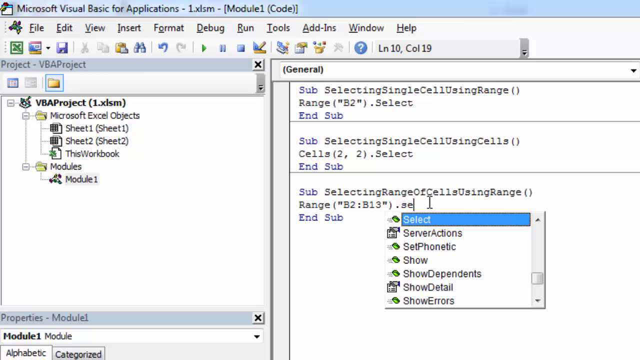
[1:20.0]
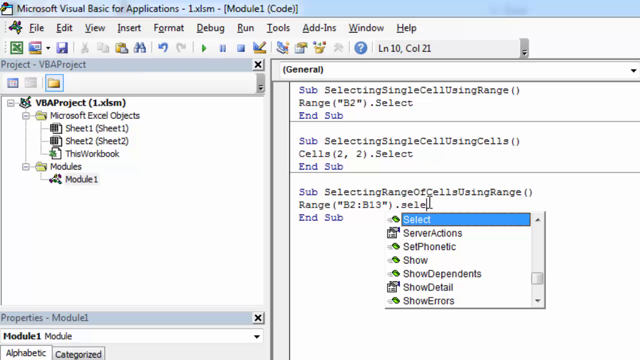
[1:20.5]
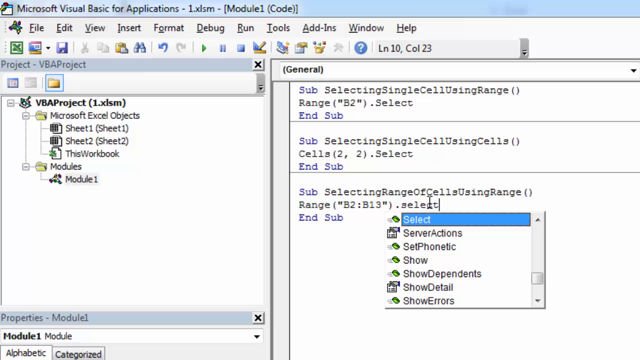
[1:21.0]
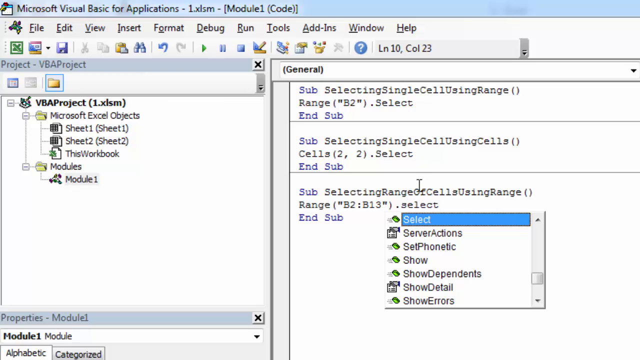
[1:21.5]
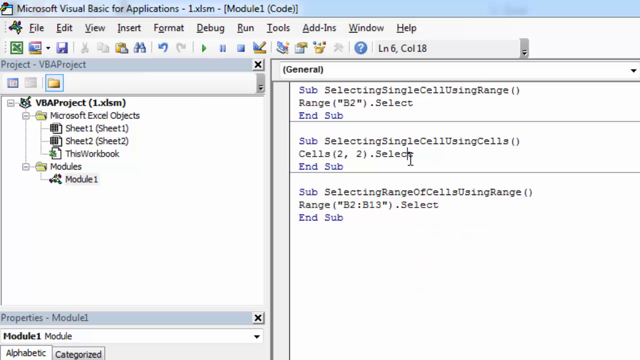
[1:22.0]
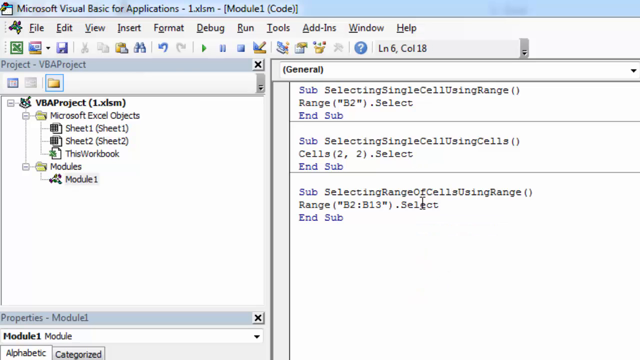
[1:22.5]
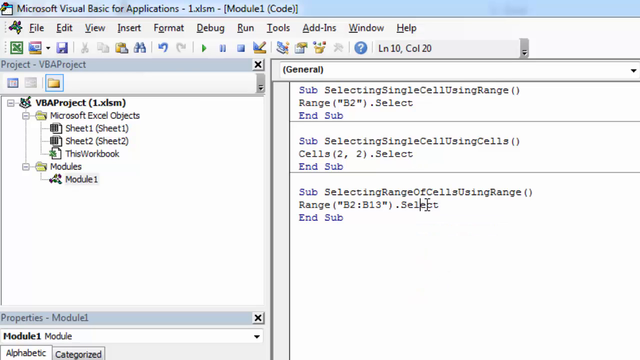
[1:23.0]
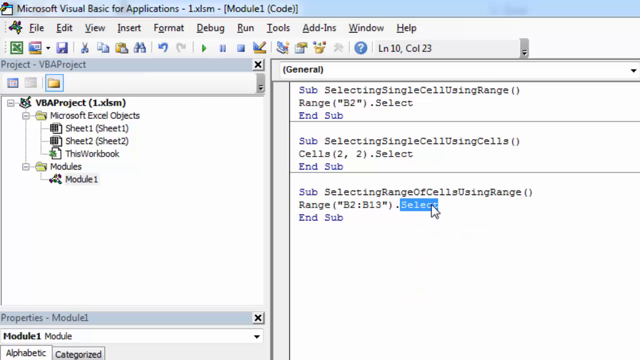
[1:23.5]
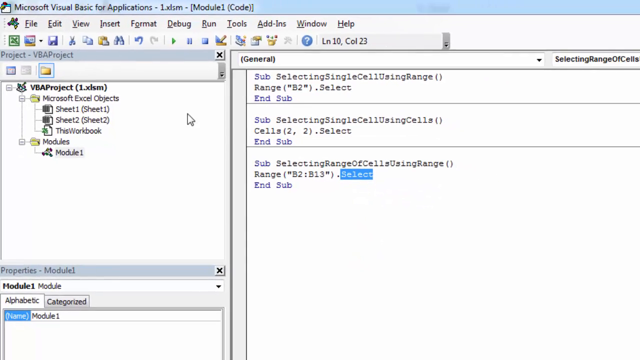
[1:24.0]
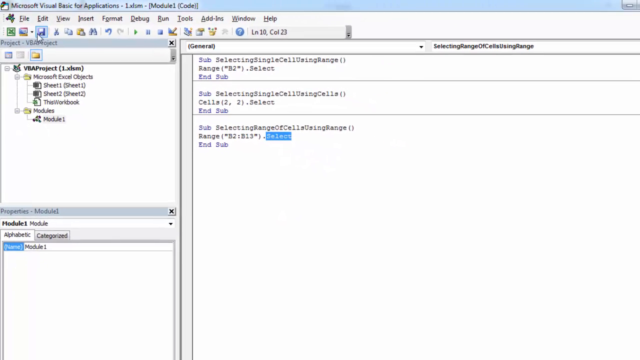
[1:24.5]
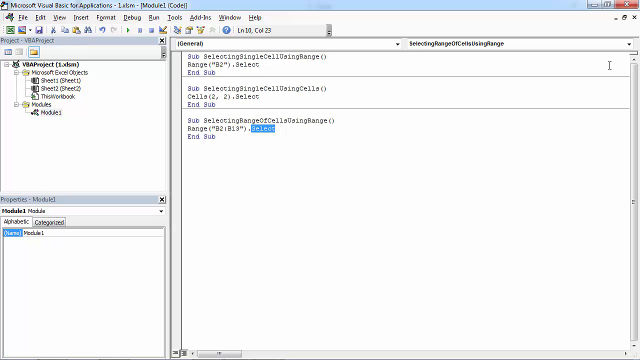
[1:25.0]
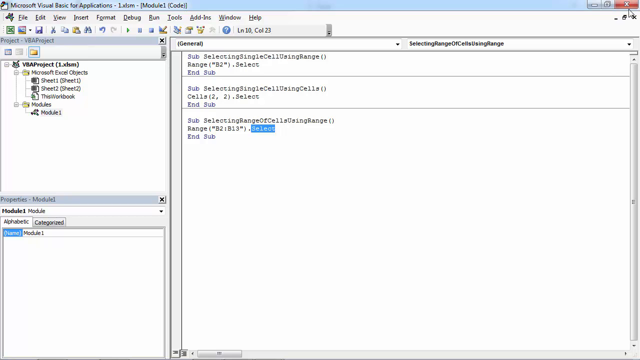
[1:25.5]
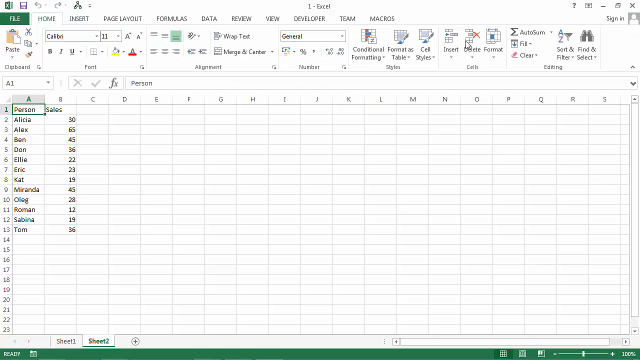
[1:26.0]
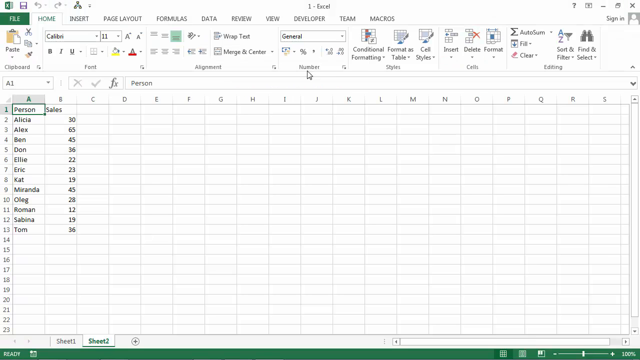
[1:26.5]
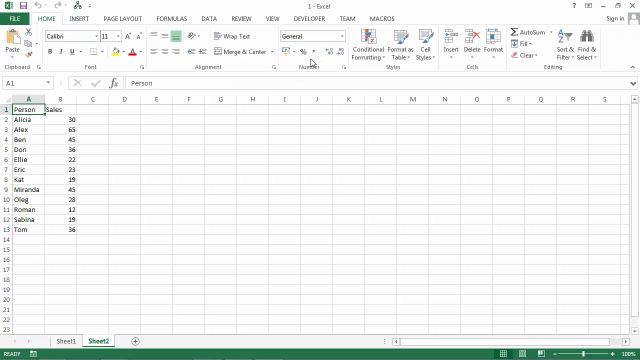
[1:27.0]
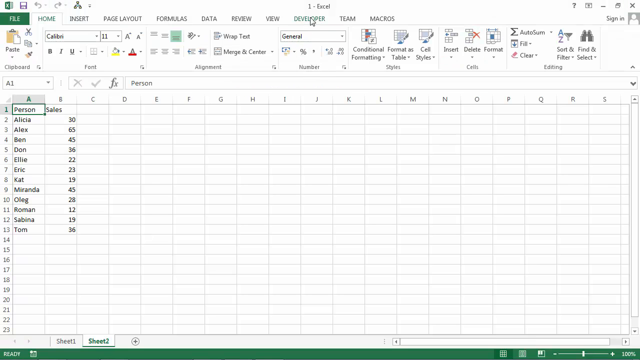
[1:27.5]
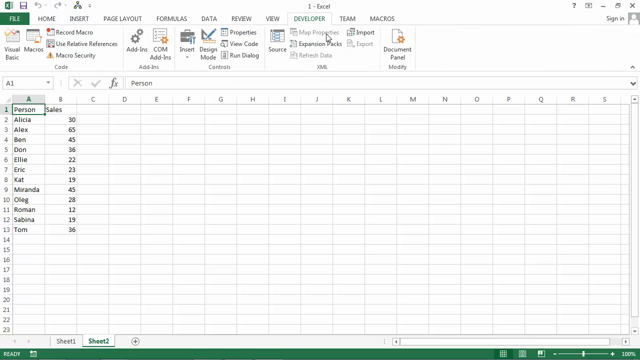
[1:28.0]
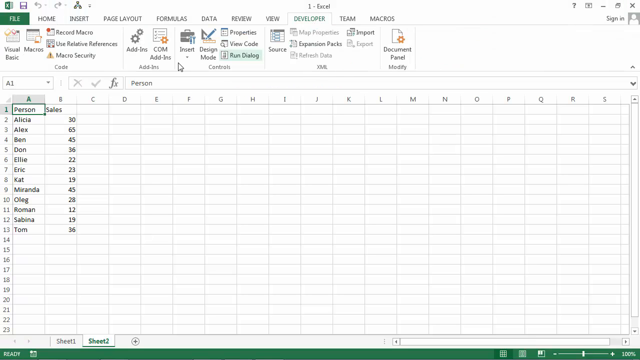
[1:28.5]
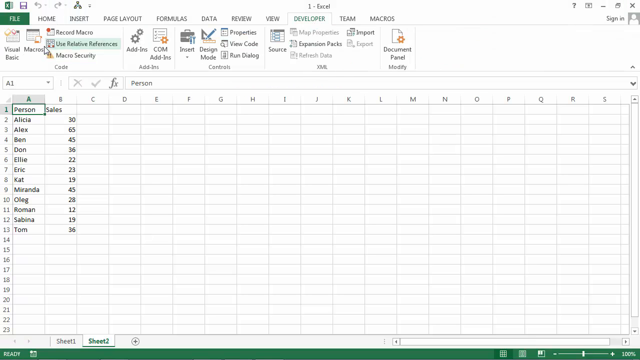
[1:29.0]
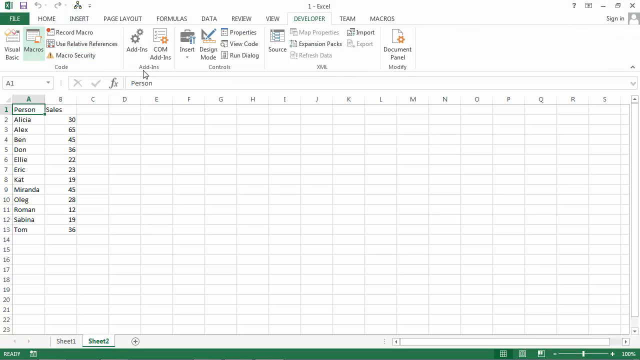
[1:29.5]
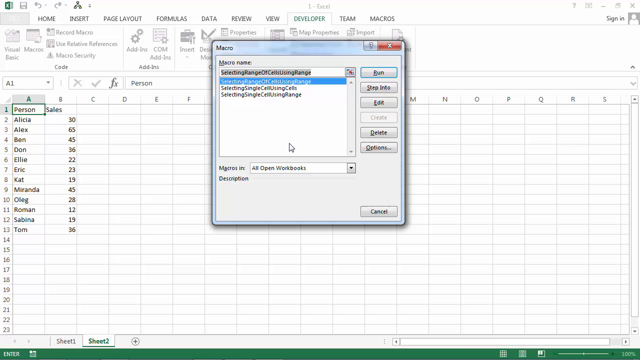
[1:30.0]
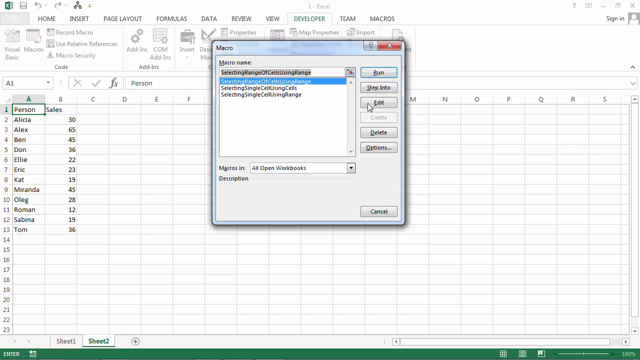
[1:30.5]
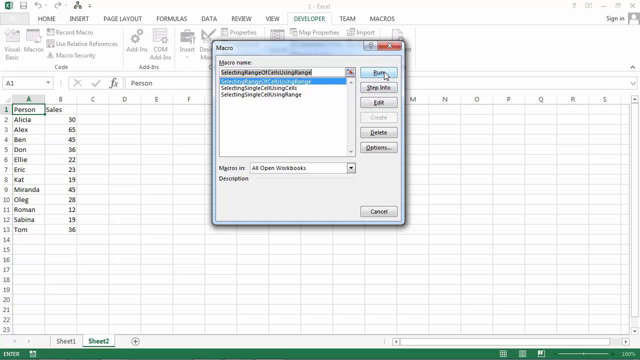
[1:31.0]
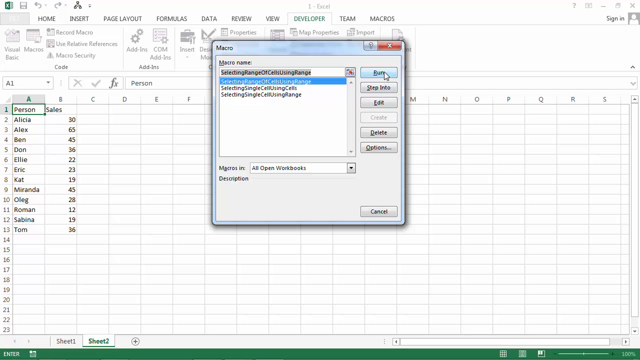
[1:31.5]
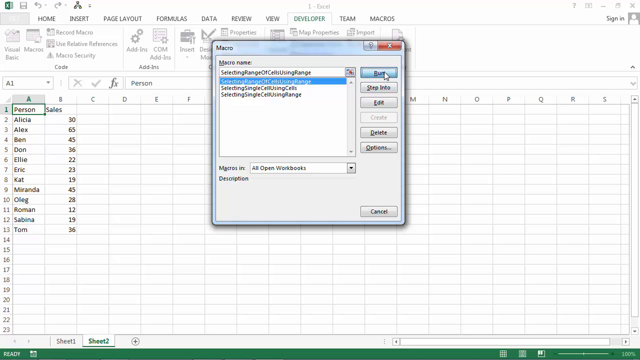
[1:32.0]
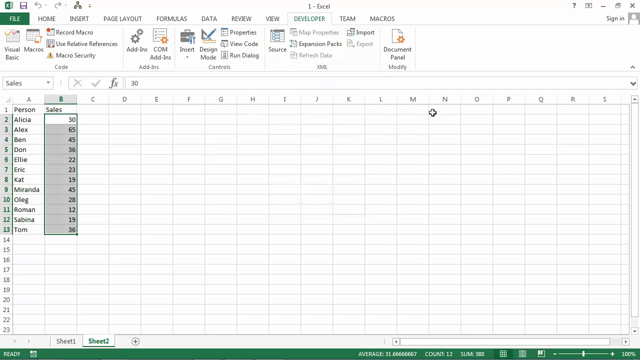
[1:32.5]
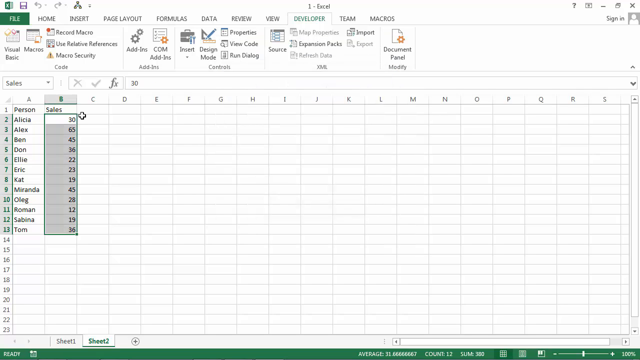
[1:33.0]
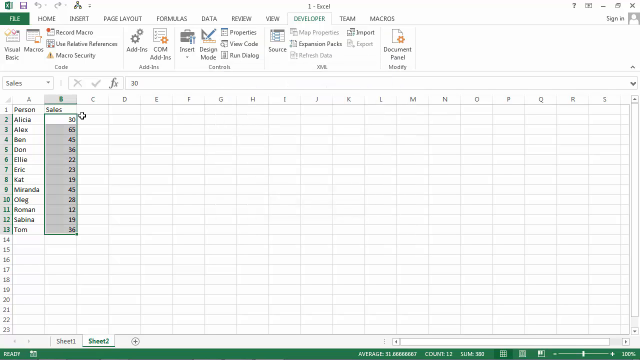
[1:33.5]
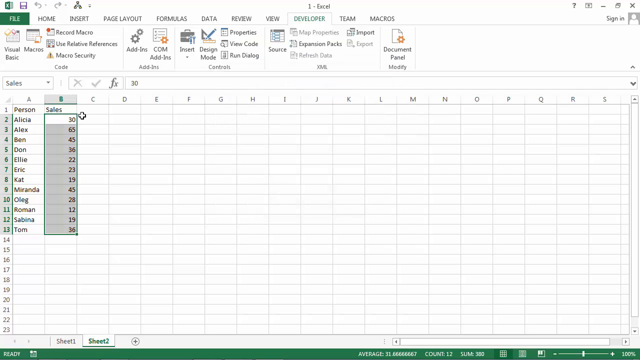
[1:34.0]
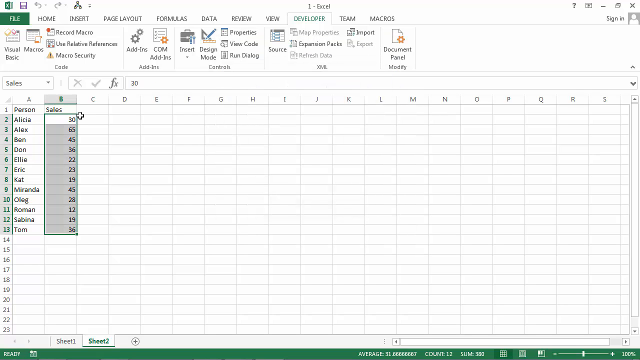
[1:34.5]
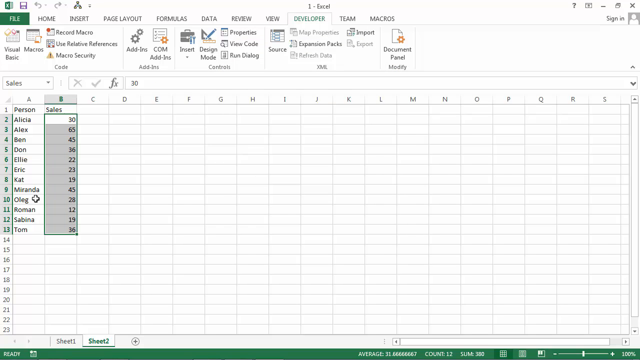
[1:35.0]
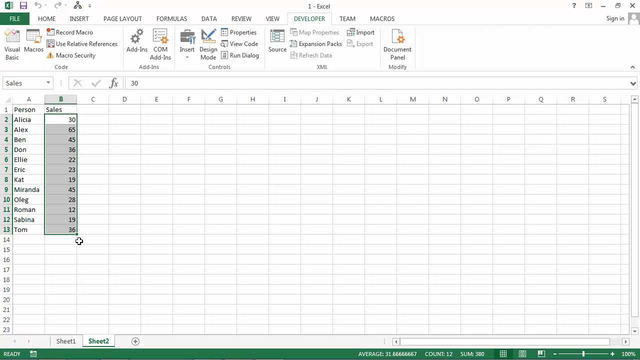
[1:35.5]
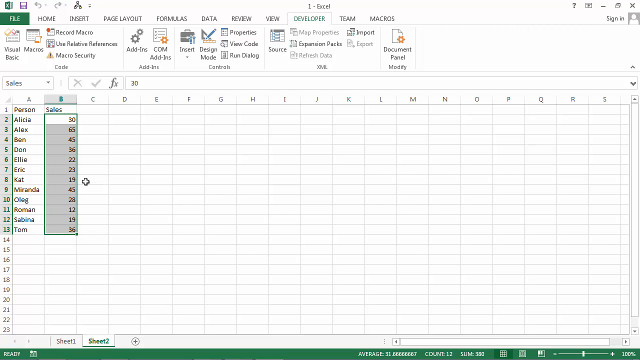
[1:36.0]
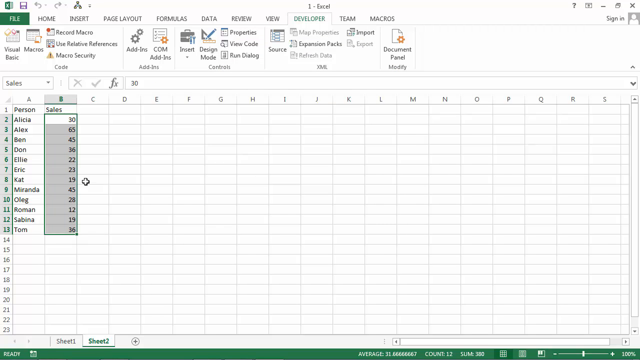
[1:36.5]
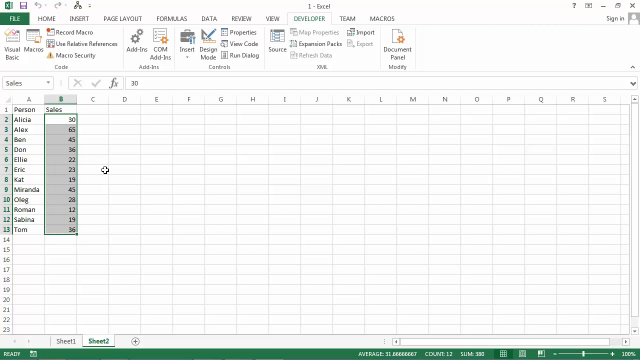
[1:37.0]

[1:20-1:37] Microsoft Visual Basic for Applications is zoomed into the upper left-hand corner, showing the two toolbars across the top, the left-hand project panel, and the right-hand coding panel with a label on top that reads "General". Module 1 is selected in the project panel, and there are three chunks of code, each using a different strategy to select cells in Excel. In the coding panel, the user is finishing writing the word SELECT in the newly added code, which directs Excel to select the range of cells from B2 to B13. They highlight, select, and zoom out to show the full application. They click something on the left-hand side that makes toolbars disappear, then click the red X to exit the program. This returns to an Excel document with a column labeled Person and a column labeled Sales, with 12 entries beneath each title. The user selects the Macros option in Excel, which opens a pop-up menu, and selects the second option. They hit the run button, and the cells between B2 and B13 are automatically selected. The user moves the plus-shaped cursor in a rough box around the highlighted cells.